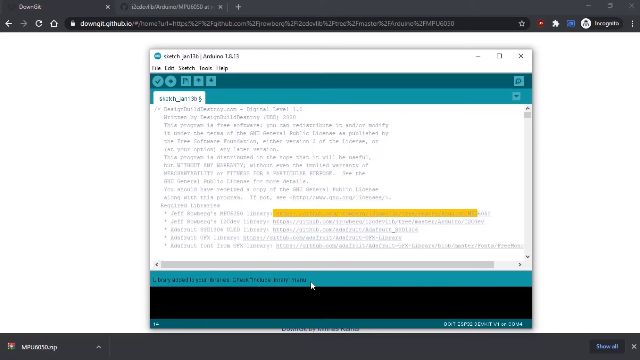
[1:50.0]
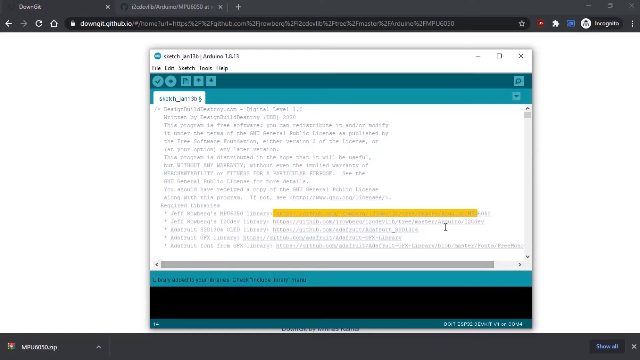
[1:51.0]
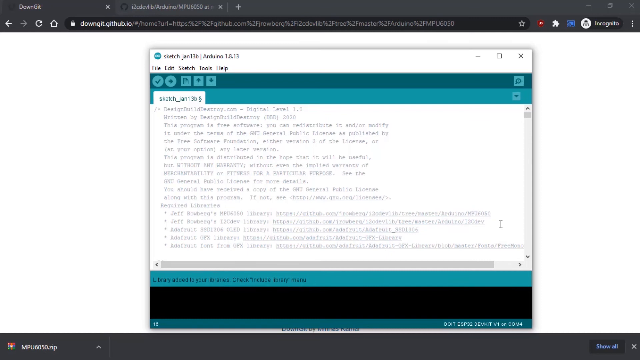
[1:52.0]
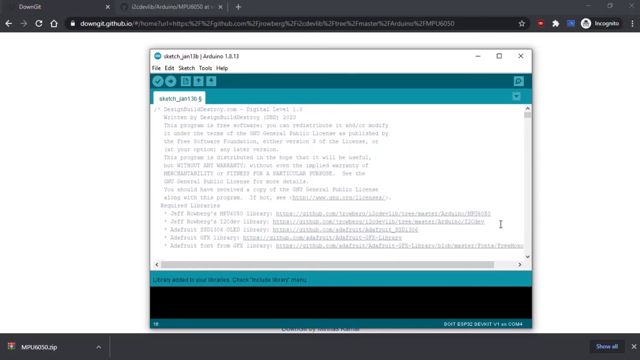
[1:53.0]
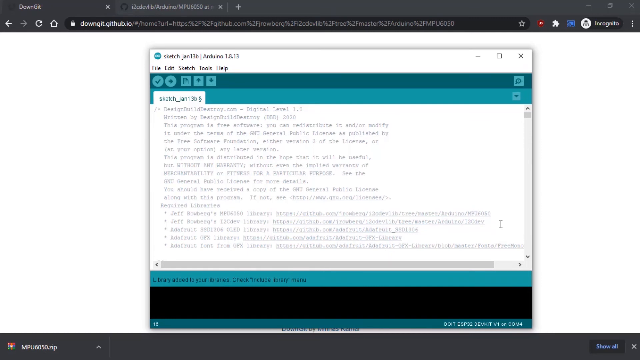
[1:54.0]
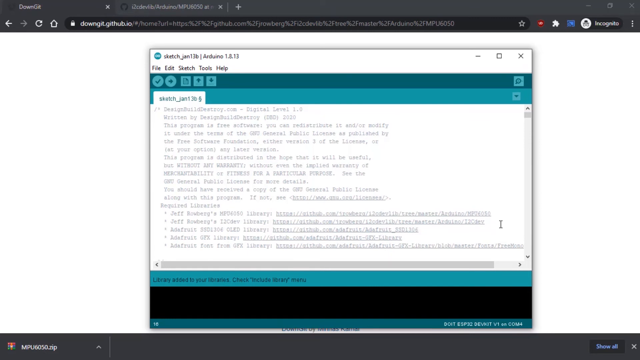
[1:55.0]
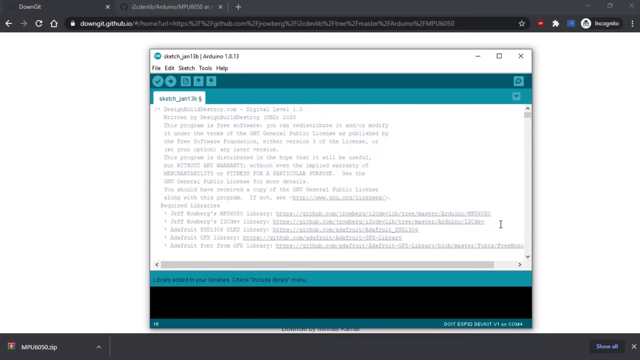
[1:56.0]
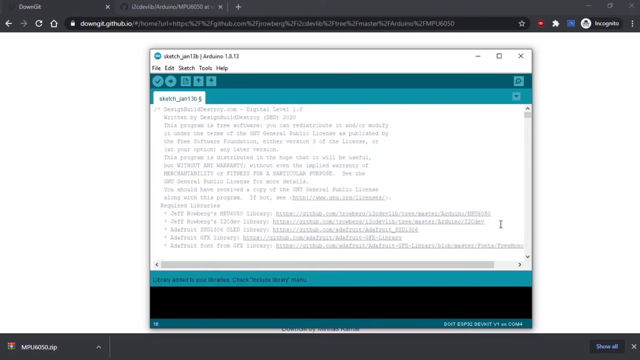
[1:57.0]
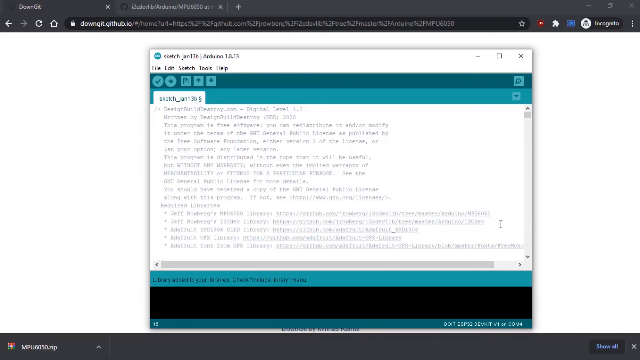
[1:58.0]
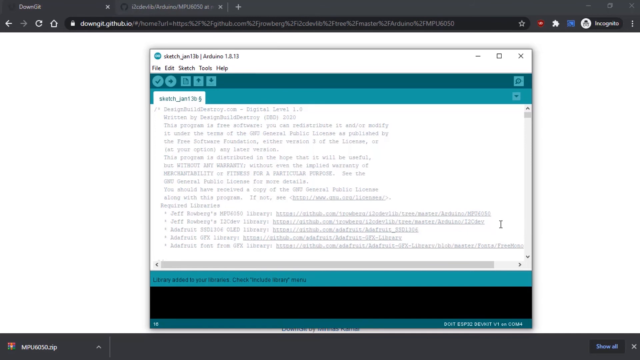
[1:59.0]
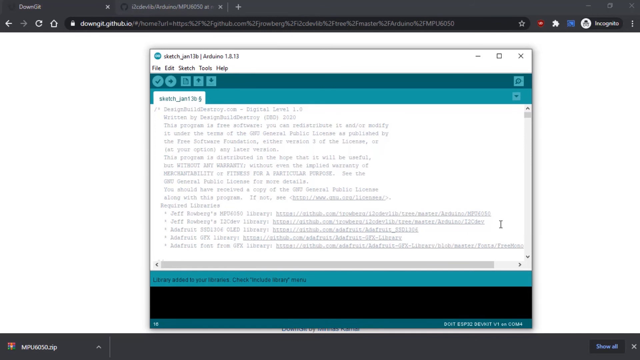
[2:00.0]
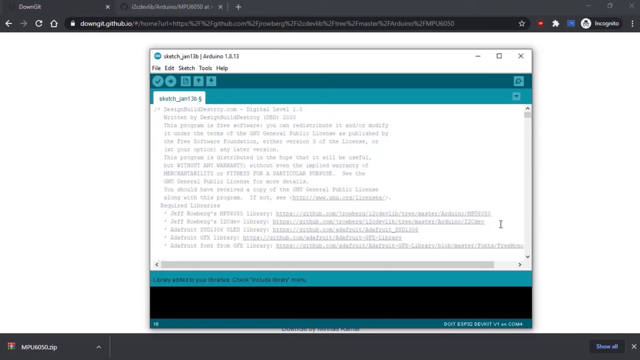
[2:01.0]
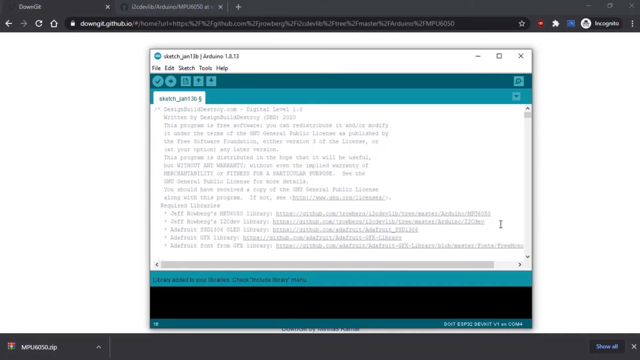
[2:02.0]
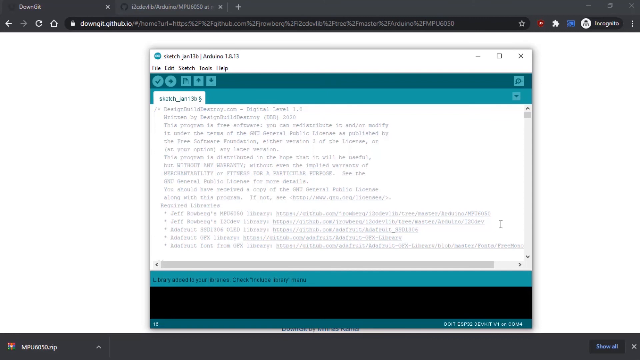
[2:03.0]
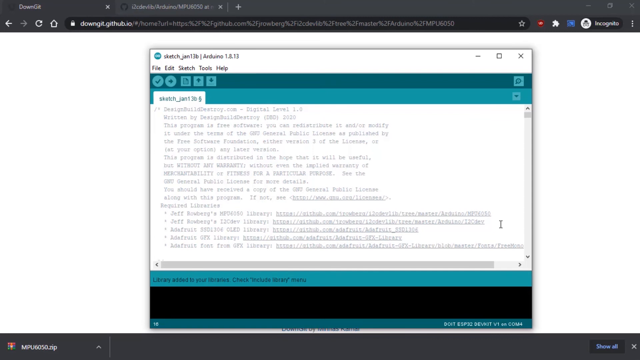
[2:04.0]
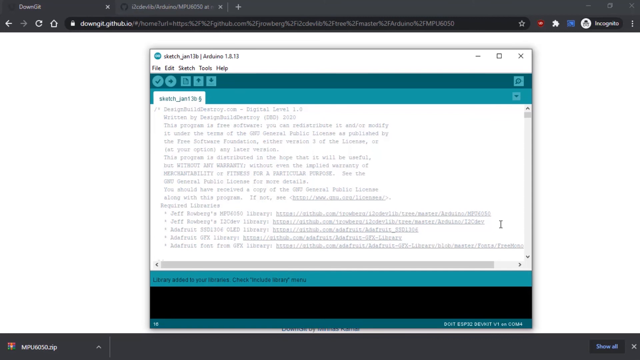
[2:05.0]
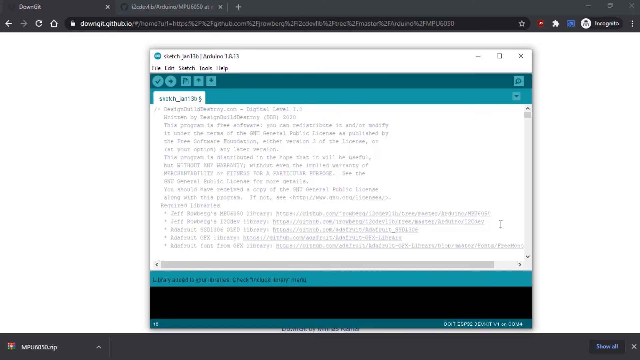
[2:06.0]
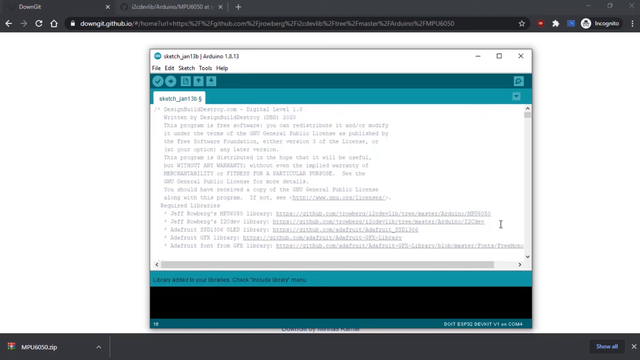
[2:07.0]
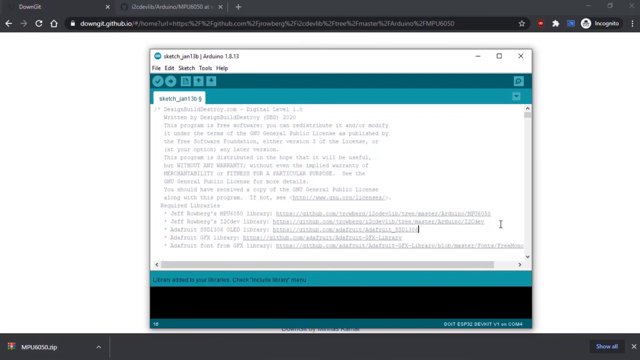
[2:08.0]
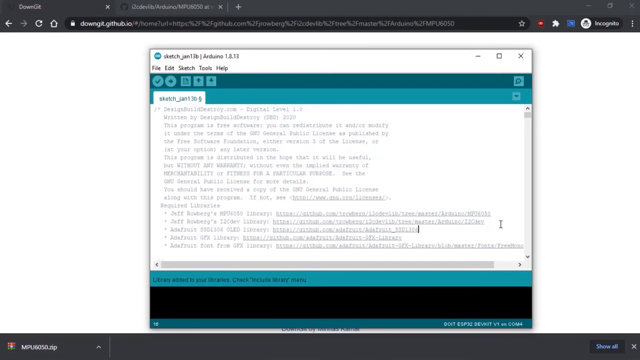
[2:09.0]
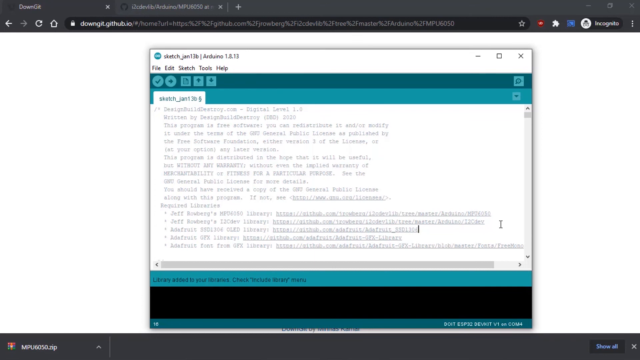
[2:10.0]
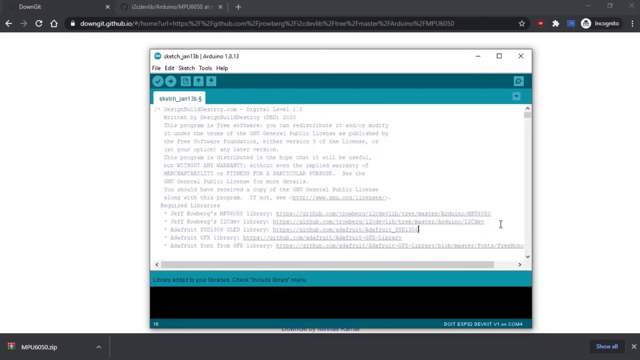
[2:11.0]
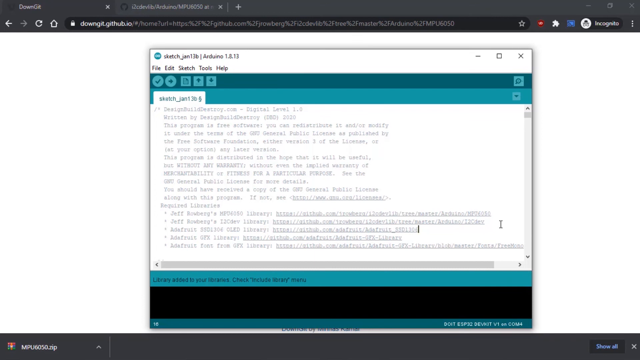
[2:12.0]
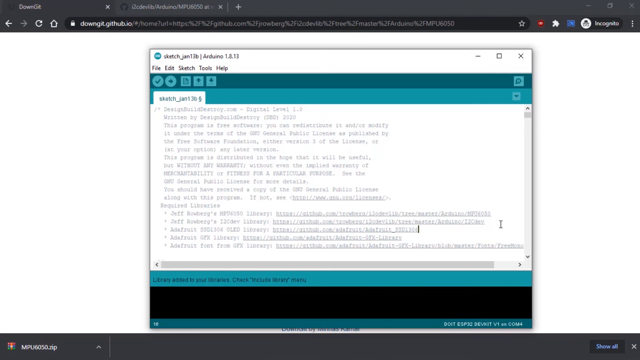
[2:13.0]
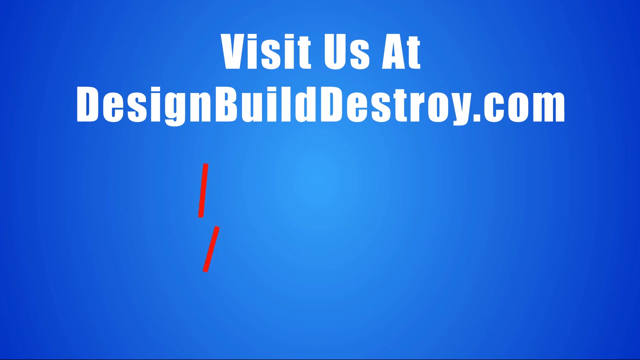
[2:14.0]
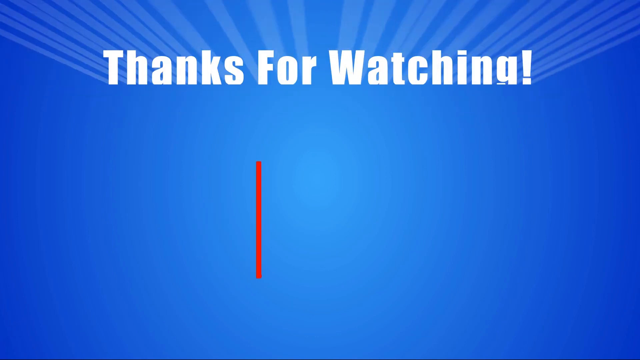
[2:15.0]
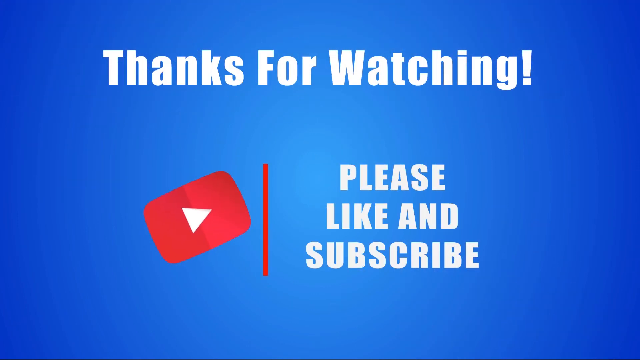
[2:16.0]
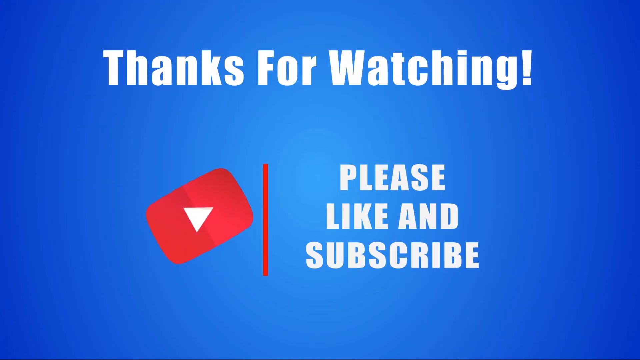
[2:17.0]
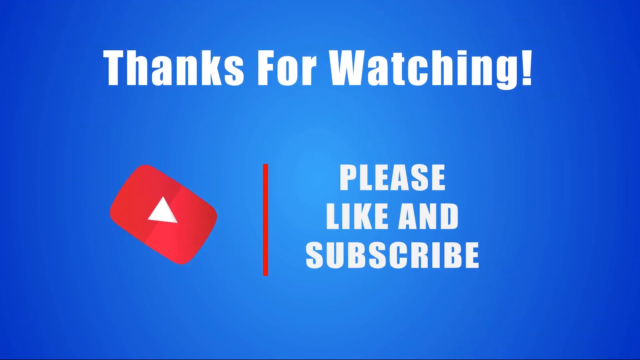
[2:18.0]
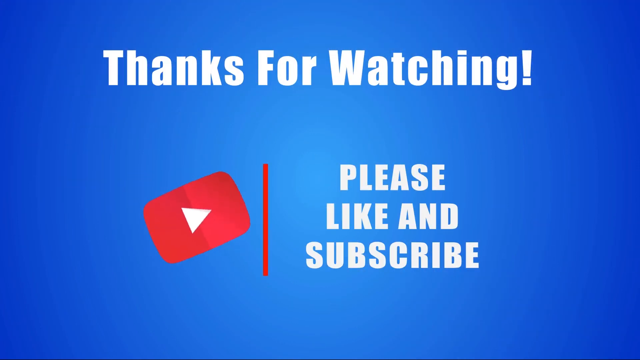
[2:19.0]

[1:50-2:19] A computer screen shows an internet browser window overlaid by a smaller Arduino application window with a sketch file open. The cursor flashes at the end of a line in the sketch file, but no other motion or interaction happens. The video then transitions to an outro screen with a blue background and white text at the top that says "visit us at designbuilddestroyer.com". Below it, a red vertical line appears and moves to the right; as it moves, a YouTube play button icon appears on its left side, and white text appears on its right side that says "please like and subscribe". The YouTube icon rocks back and forth in a swinging motion.